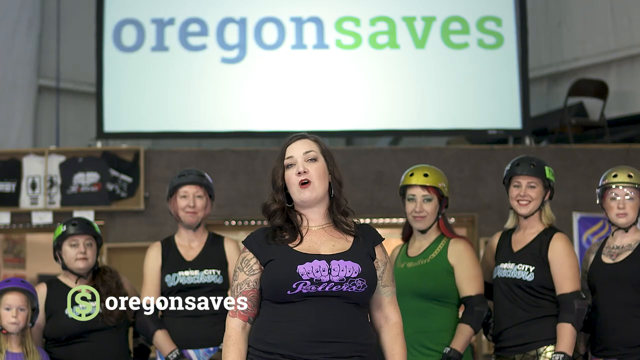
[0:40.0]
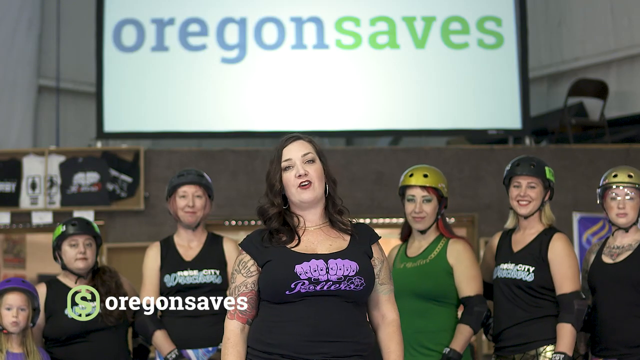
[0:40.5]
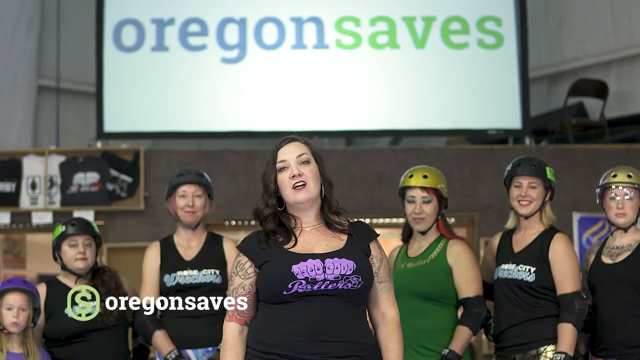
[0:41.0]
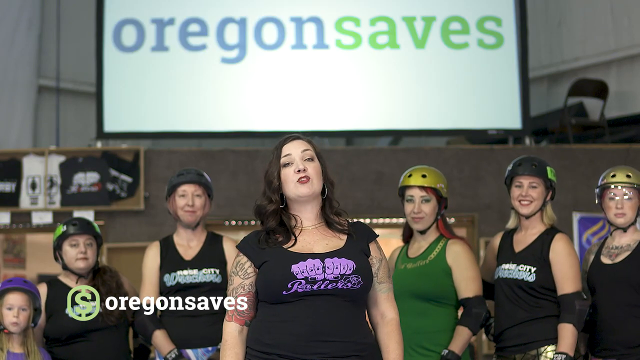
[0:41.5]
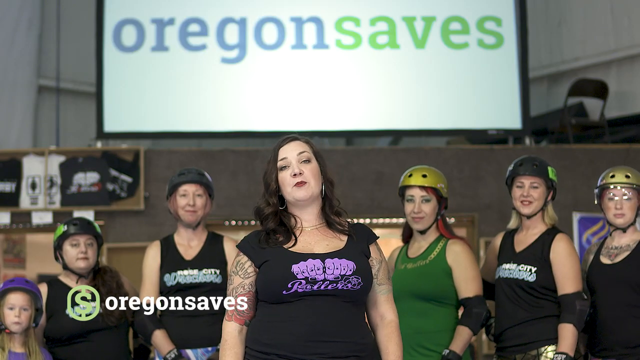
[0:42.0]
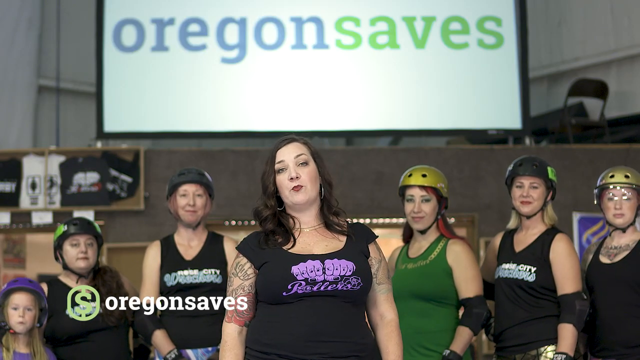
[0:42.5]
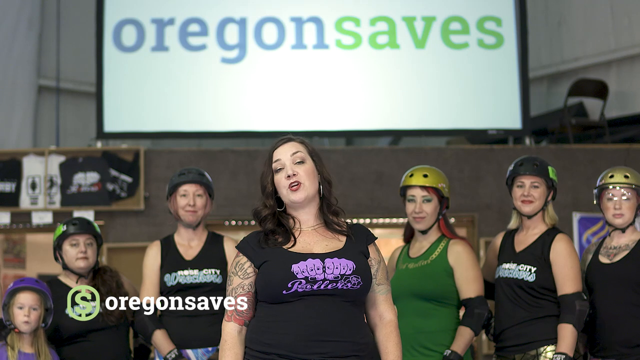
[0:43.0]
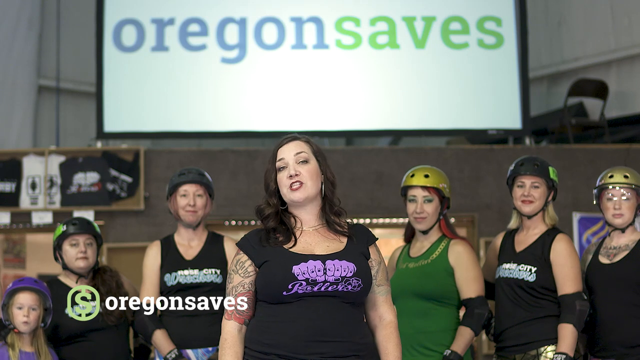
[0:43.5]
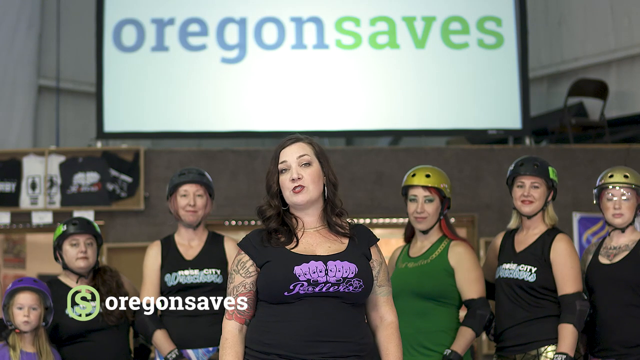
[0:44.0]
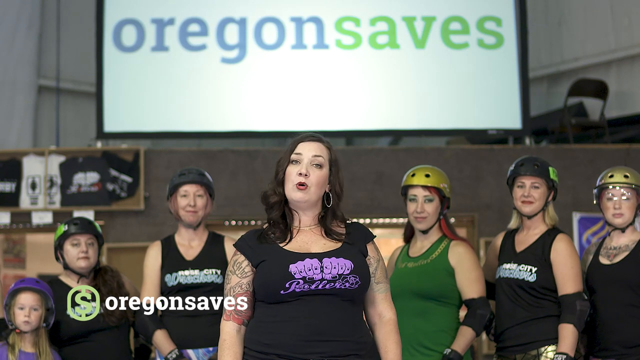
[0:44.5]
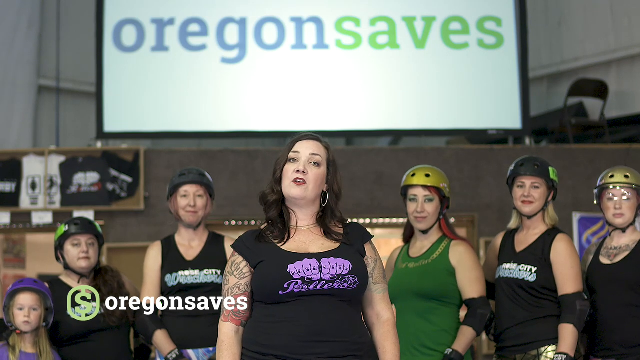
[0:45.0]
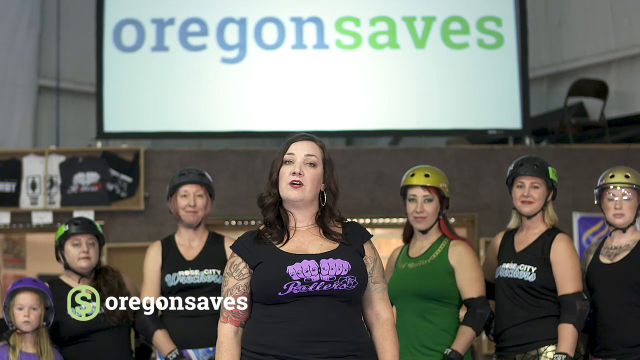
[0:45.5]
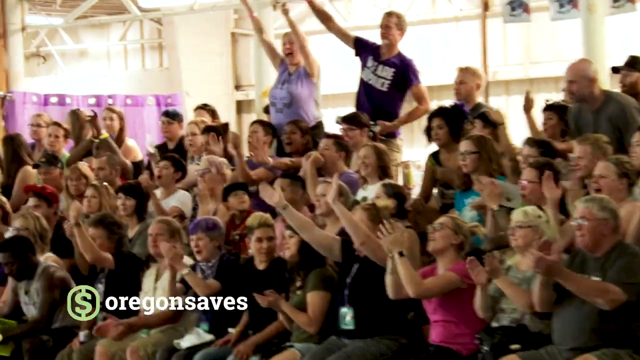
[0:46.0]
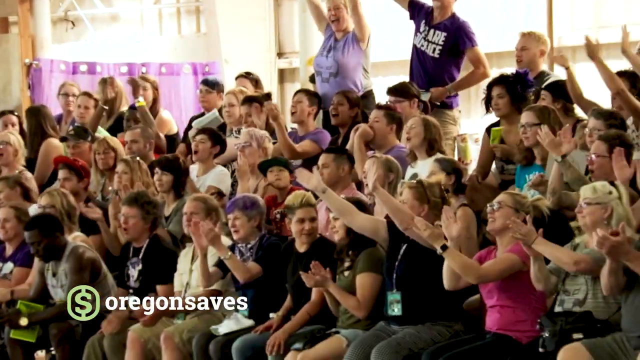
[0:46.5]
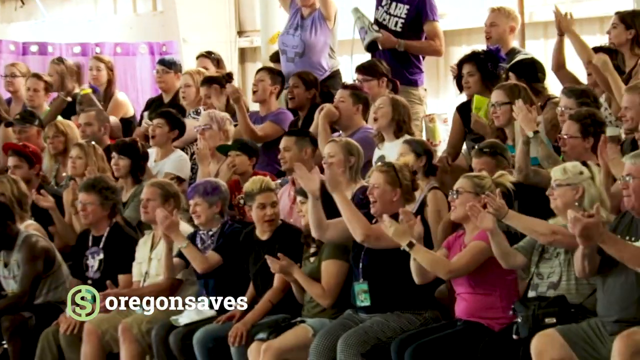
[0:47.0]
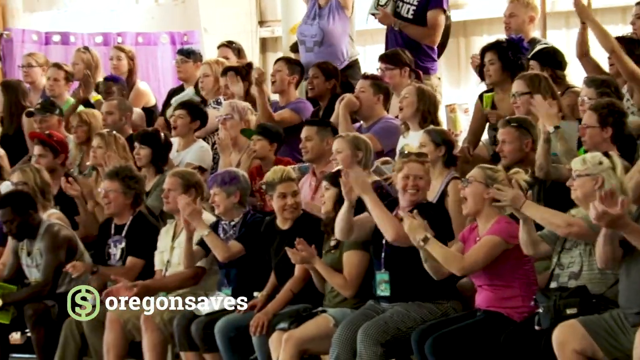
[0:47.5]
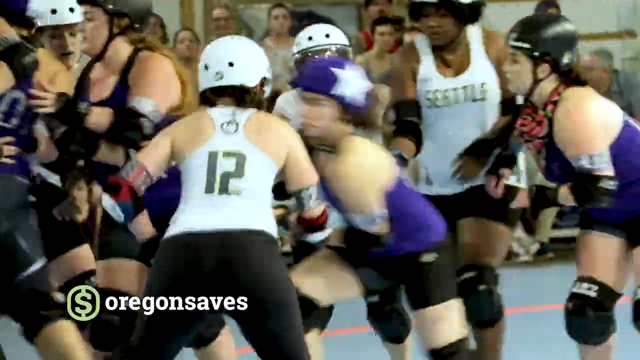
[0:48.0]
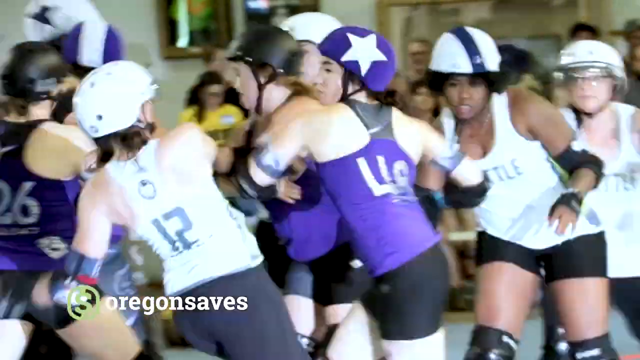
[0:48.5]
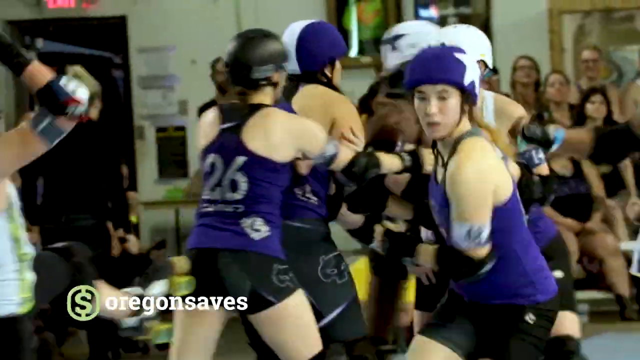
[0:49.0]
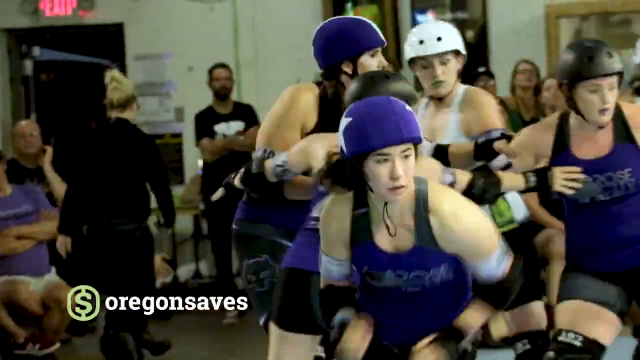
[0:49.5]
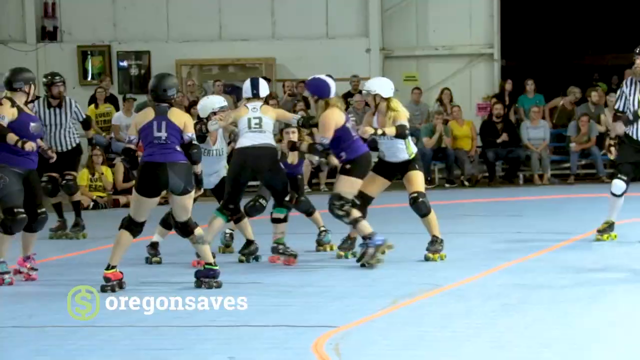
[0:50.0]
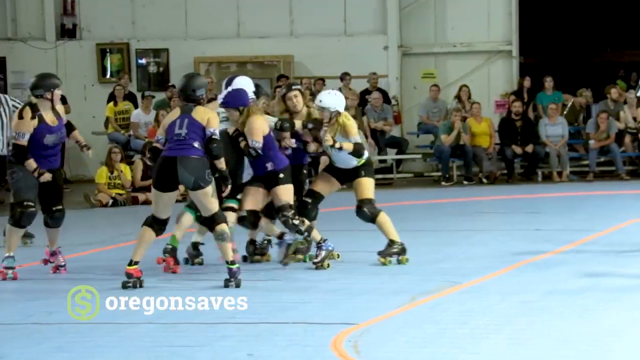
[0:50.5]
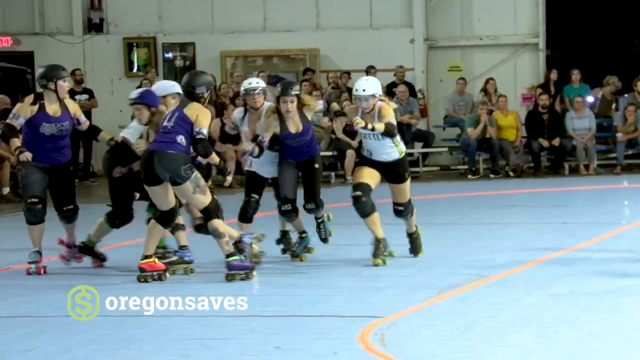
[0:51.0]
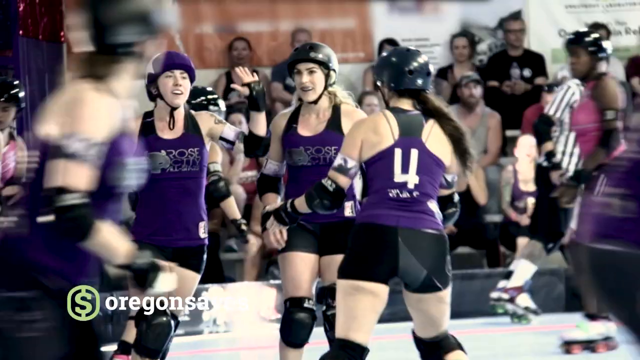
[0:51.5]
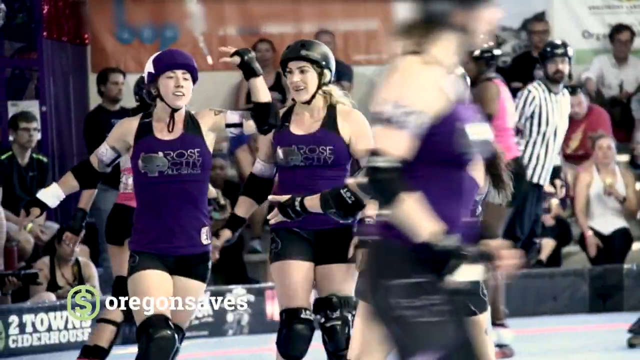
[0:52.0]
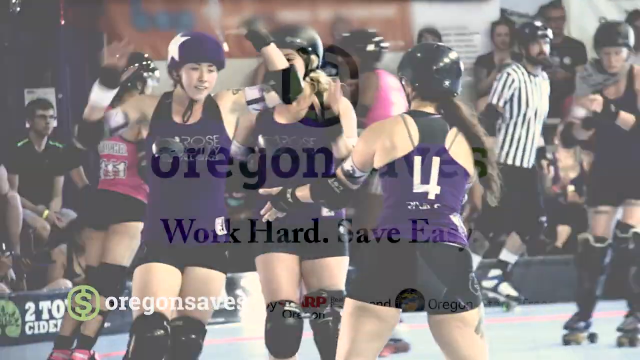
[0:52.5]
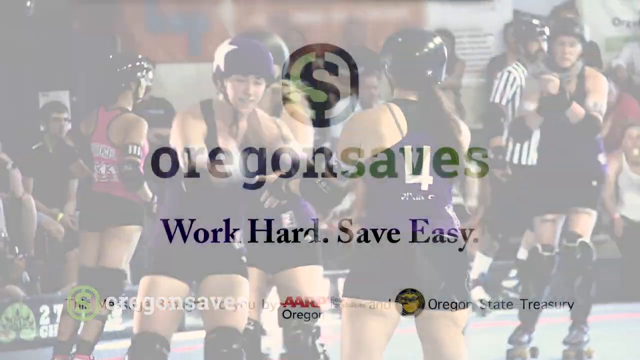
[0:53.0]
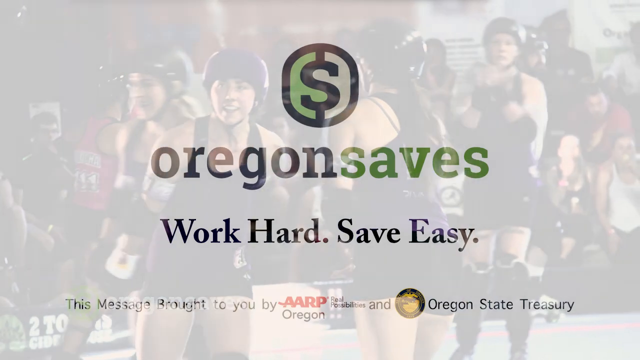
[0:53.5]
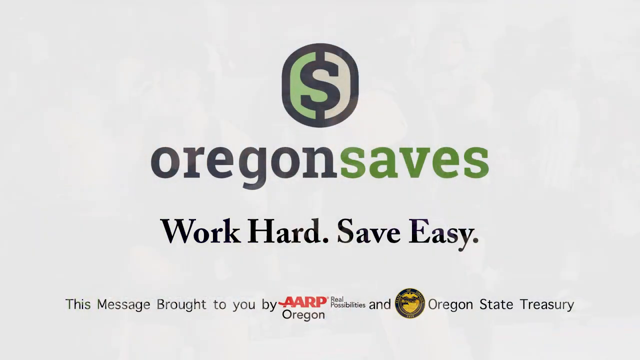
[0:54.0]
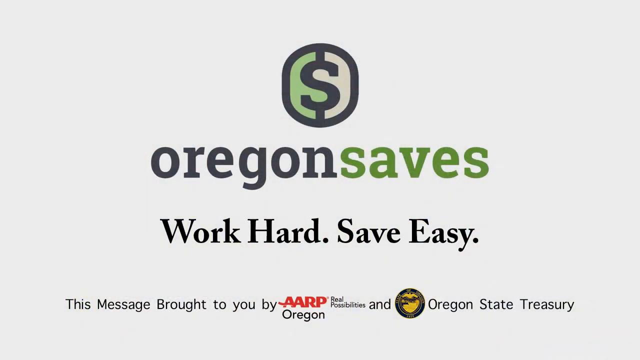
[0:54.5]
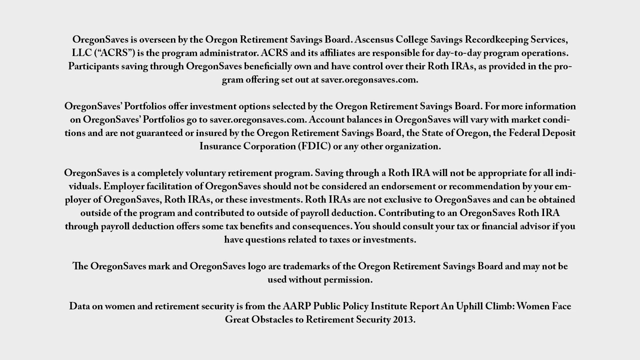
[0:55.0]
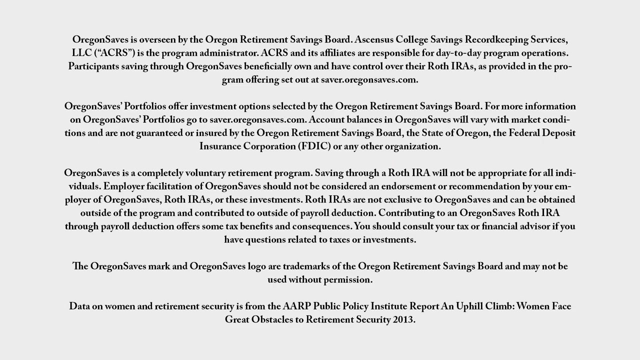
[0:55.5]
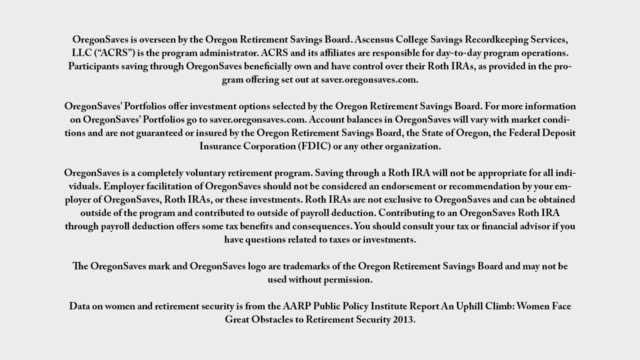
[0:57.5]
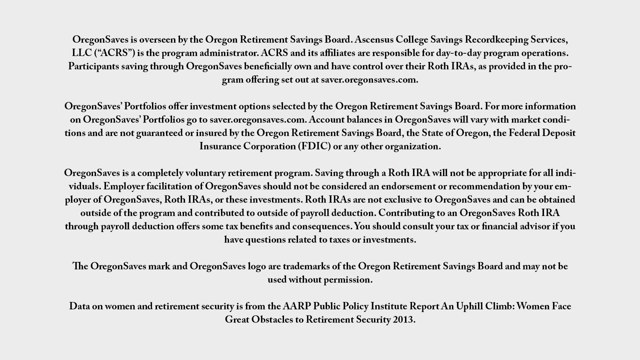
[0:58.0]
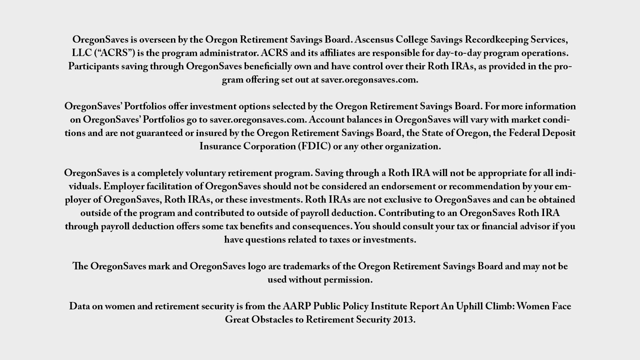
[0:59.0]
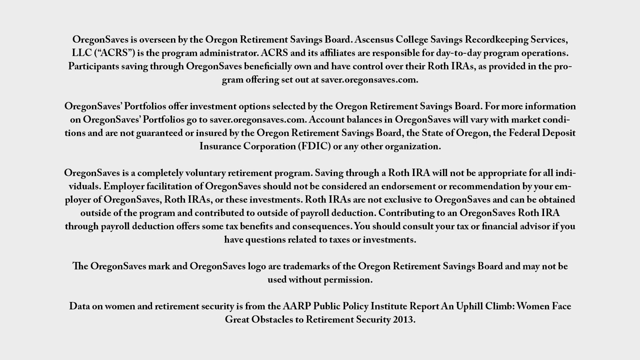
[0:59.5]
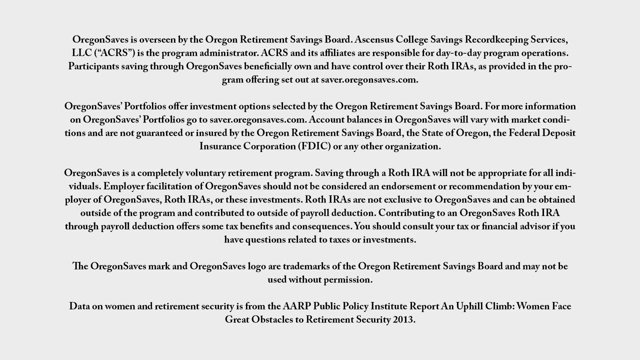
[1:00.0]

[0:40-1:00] A woman talks toward the camera with a group of six women in roller skating gear behind her, and the Oregon Saves logo behind them. The scene transitions to a crowd of people cheering on roller skaters, then to a large group of women roller skaters bumping into each other with their elbows and shoulders. Two women, both wearing purple roller skating gear, clap each other's hands. The video then fades into the Oregon Saves logo at the top, with "work hard, save easy" below it and, below that, "this message brought to you by AARP Oregon and Oregon State Treasury." It then transitions to a white screen with words about what Oregon Saves does and what it can offer.